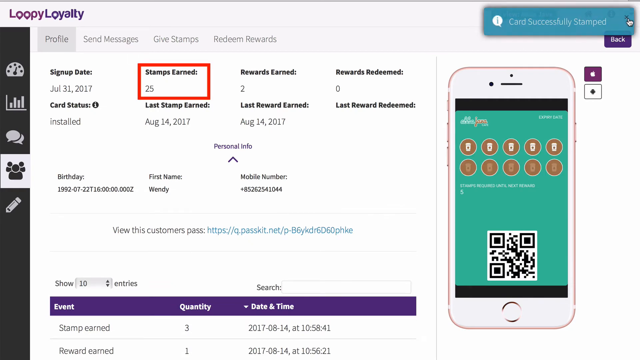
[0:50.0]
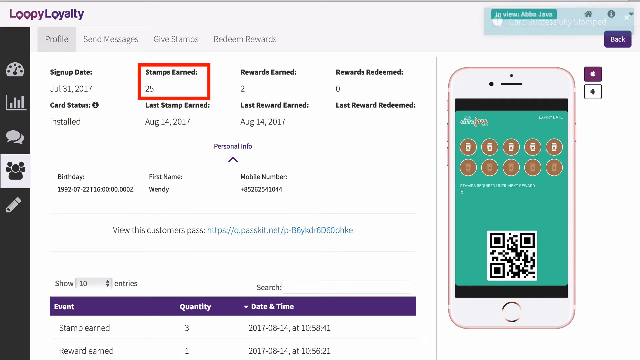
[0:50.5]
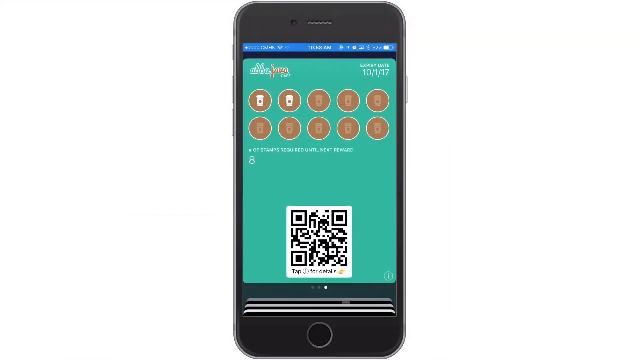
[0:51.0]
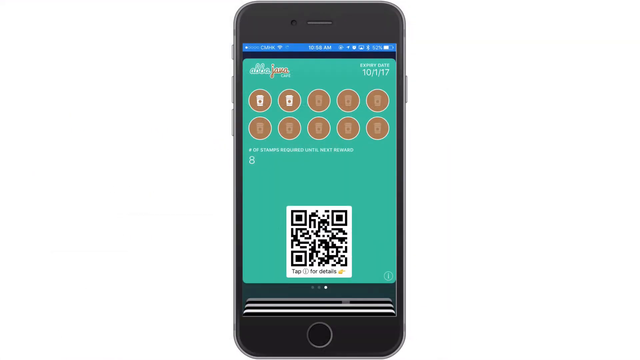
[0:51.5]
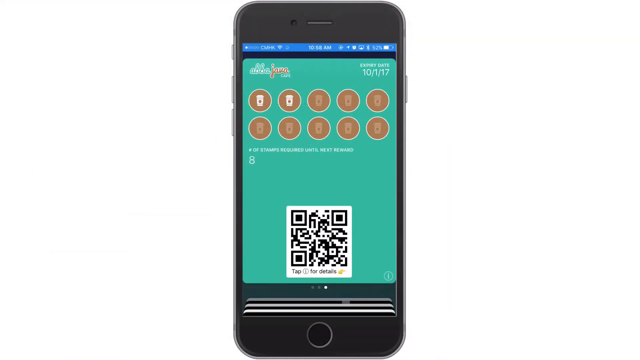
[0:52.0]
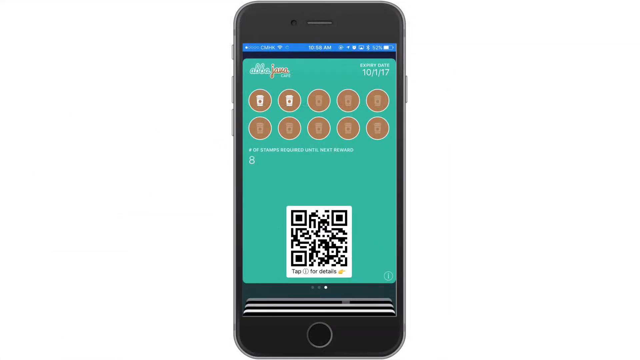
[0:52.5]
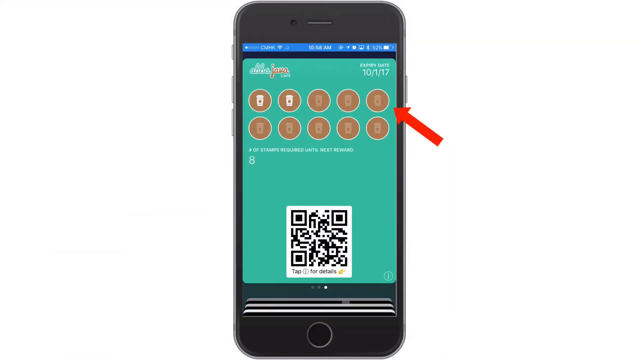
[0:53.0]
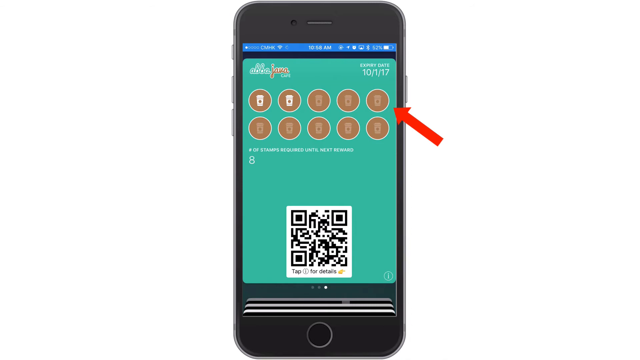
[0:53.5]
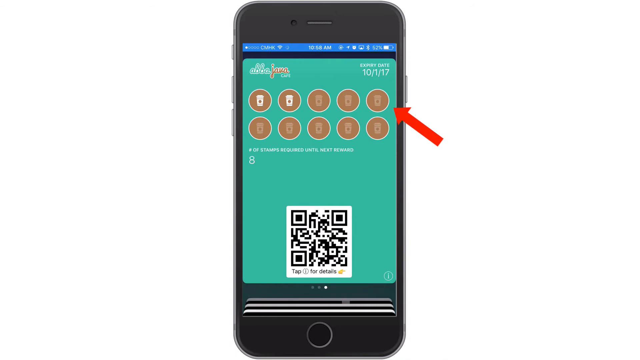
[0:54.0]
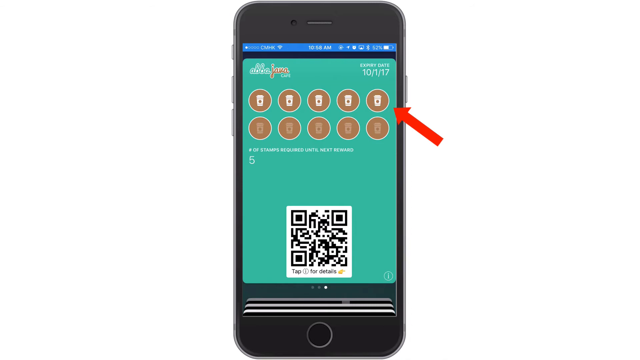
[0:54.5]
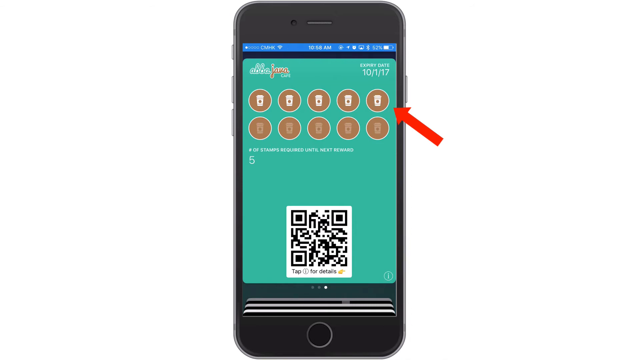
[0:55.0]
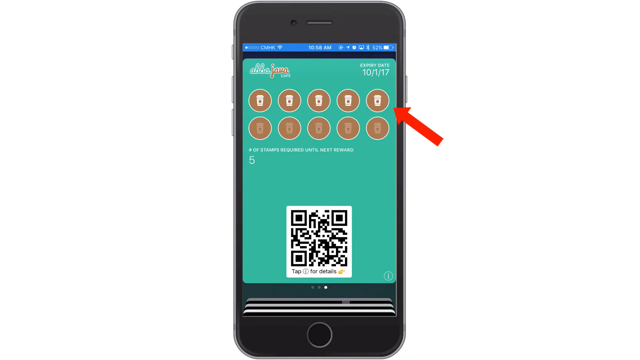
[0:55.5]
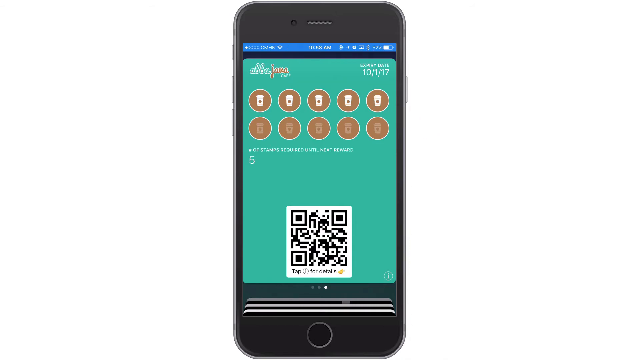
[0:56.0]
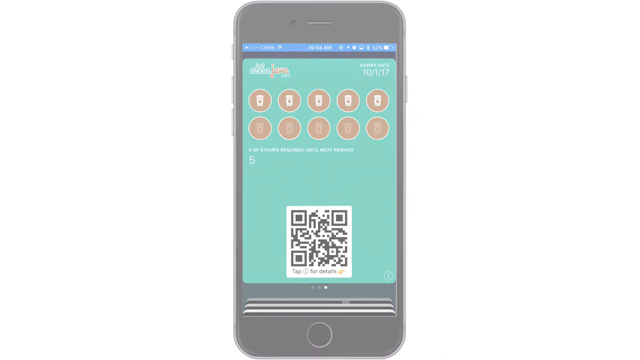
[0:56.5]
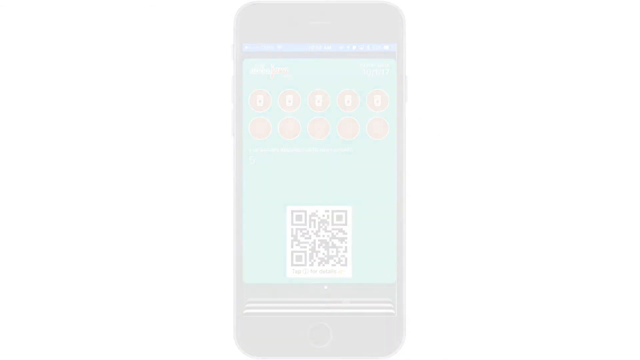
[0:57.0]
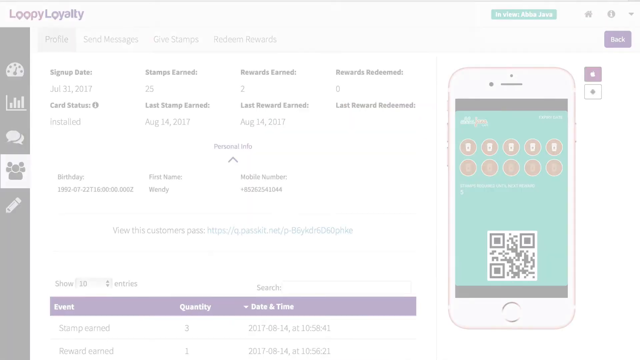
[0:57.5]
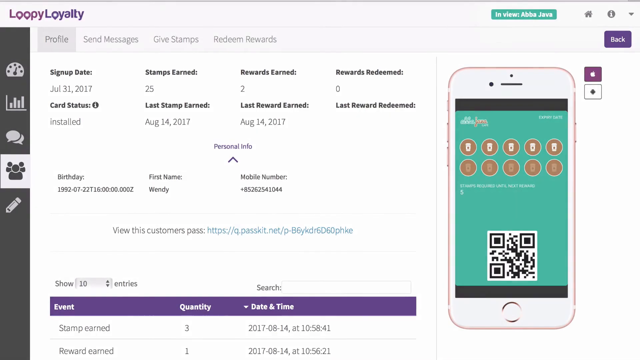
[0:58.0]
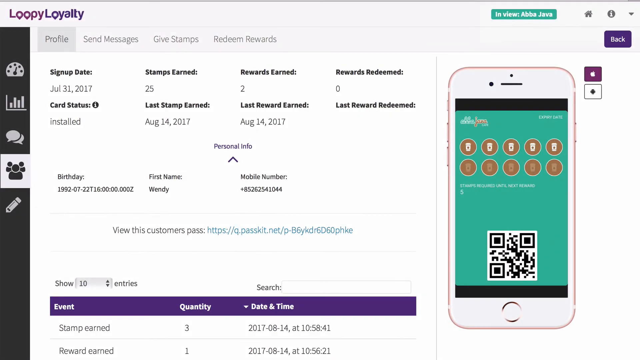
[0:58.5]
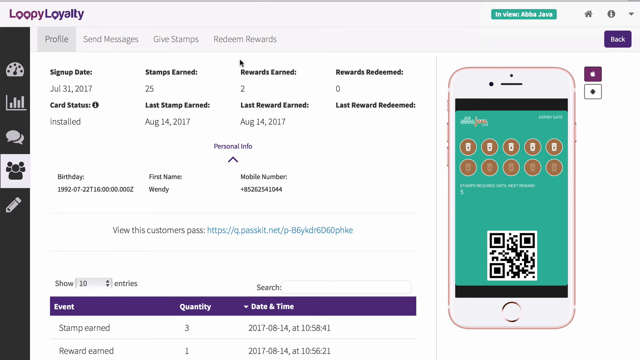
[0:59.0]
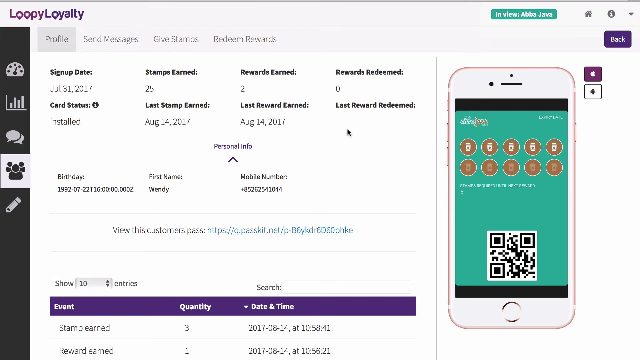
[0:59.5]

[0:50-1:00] A black mobile phone appears in the centre of a white background. Its smartphone screen is a large glass panel with a blue information bar along the top and a green background. Ten logos are displayed on it, two of which are highlighted in a brighter white to show they have been achieved, and the screen indicates that eight stamps are still needed until a reward is activated. At the bottom of the green screen is a black and white QR code. A red arrow points toward the changing number of stamps, which goes up from two to five, and then the view returns to the profile page on the user's account.